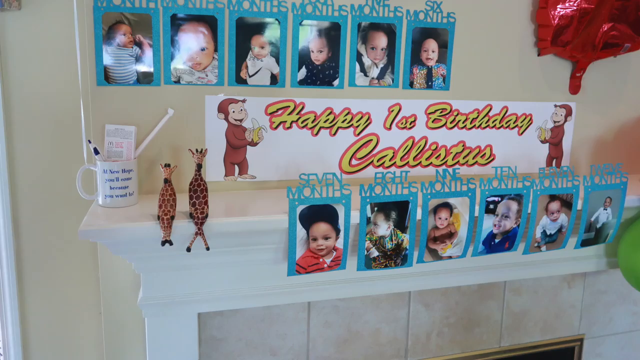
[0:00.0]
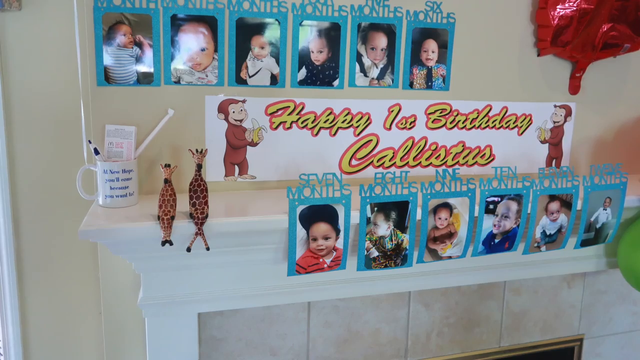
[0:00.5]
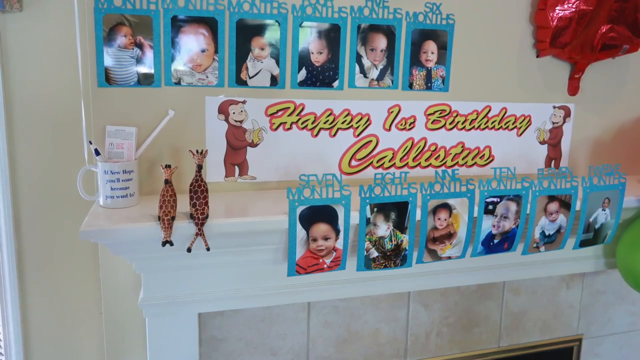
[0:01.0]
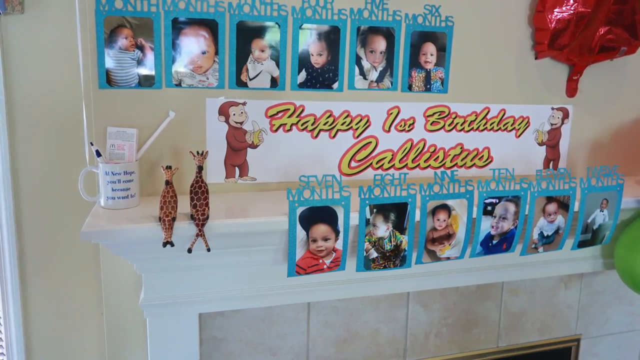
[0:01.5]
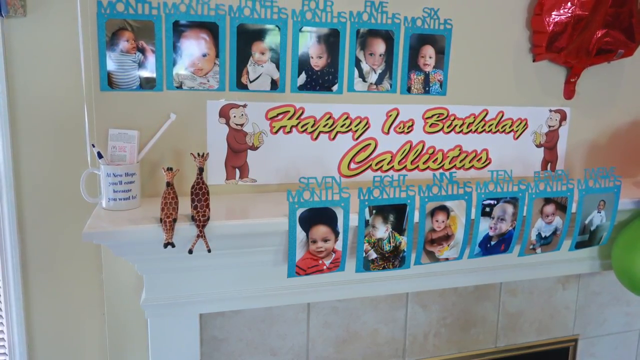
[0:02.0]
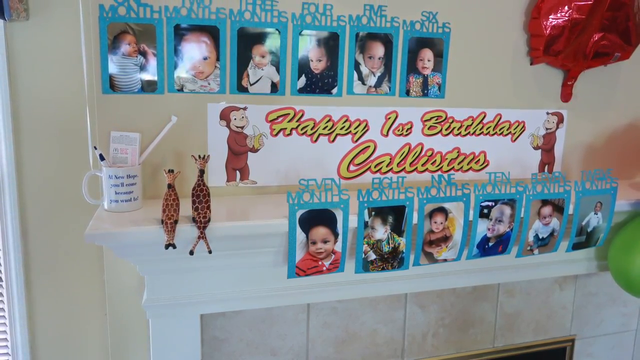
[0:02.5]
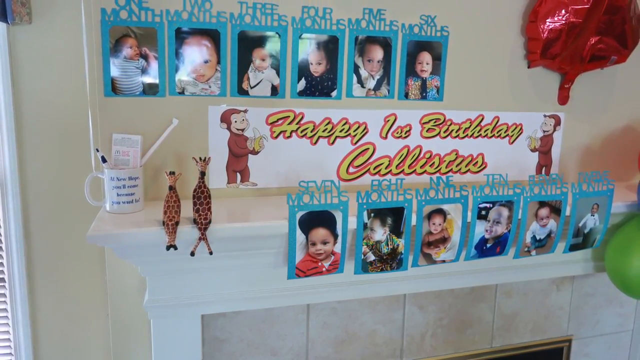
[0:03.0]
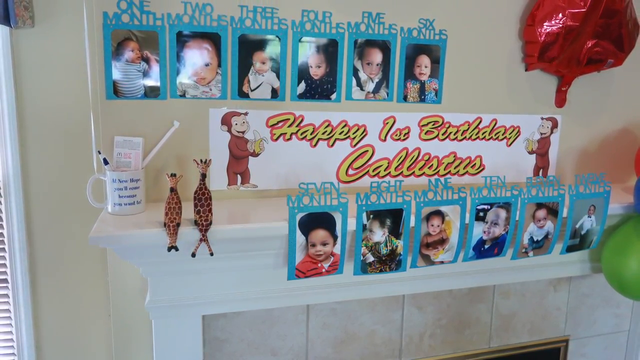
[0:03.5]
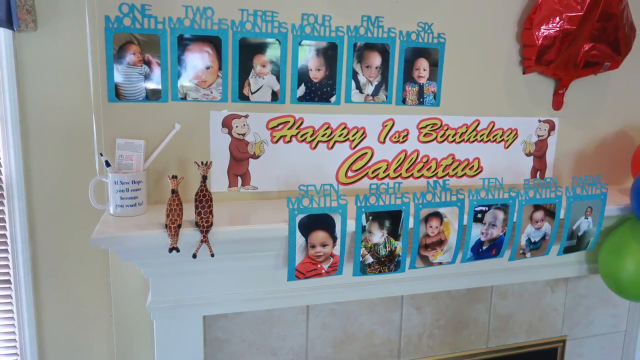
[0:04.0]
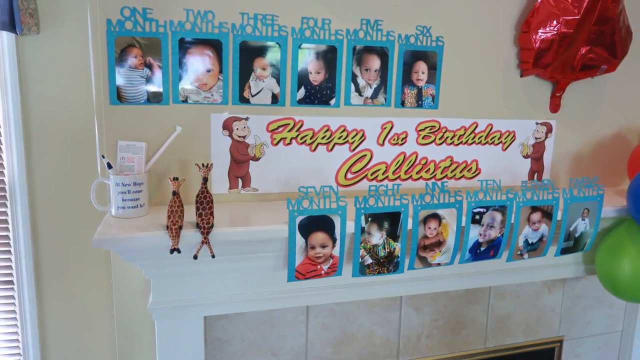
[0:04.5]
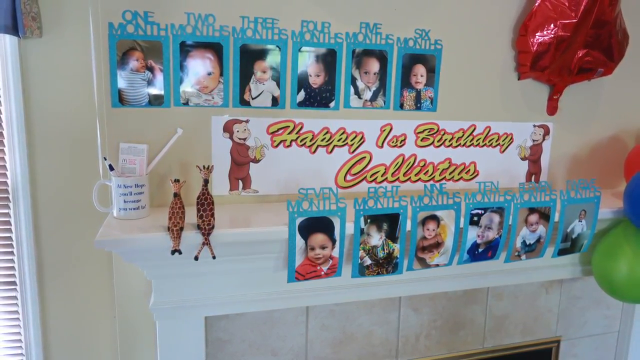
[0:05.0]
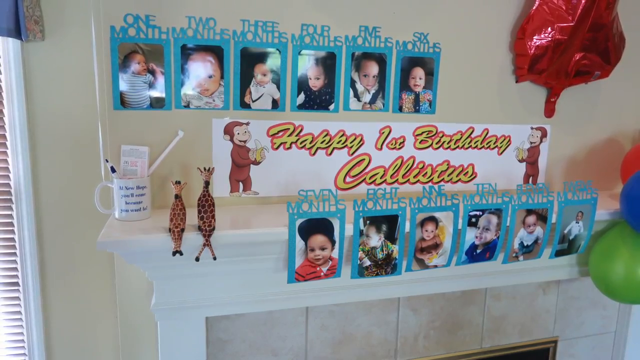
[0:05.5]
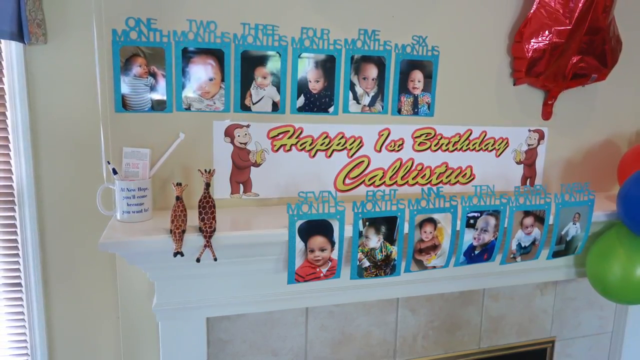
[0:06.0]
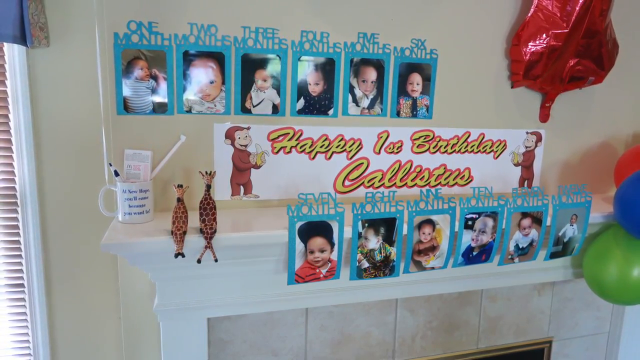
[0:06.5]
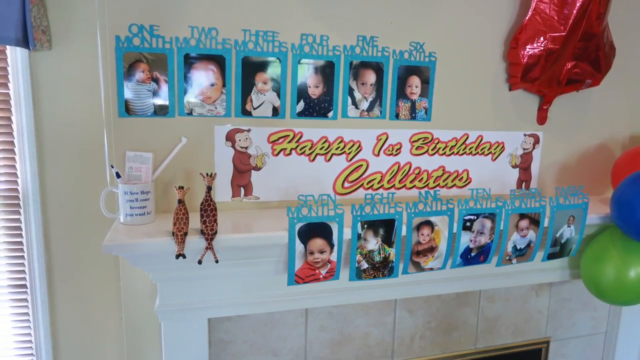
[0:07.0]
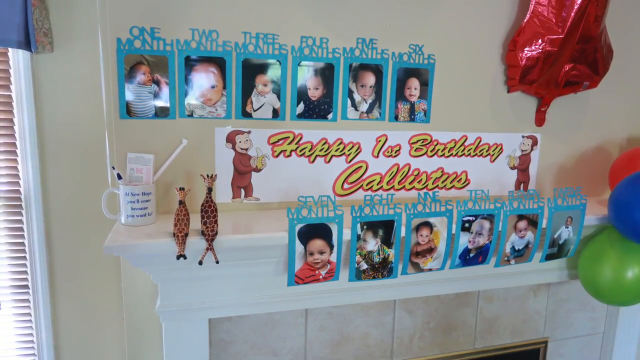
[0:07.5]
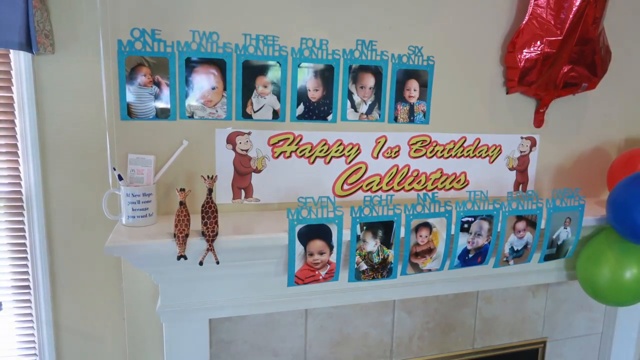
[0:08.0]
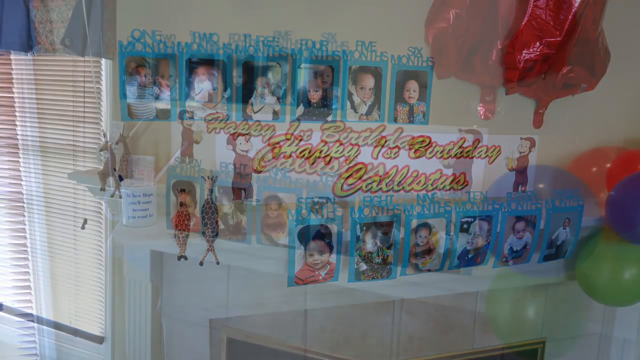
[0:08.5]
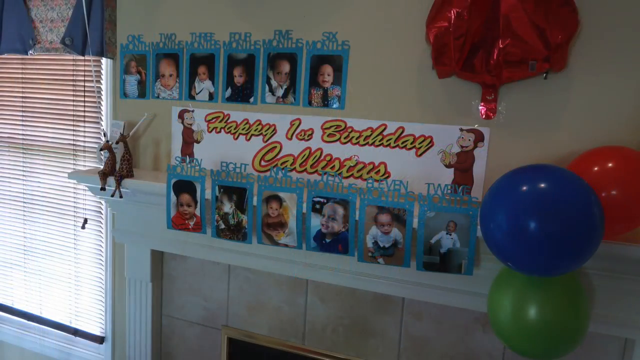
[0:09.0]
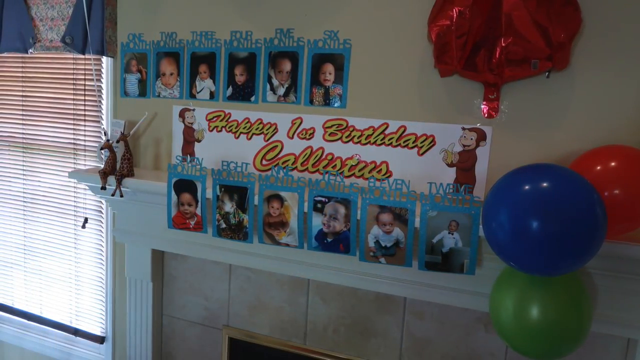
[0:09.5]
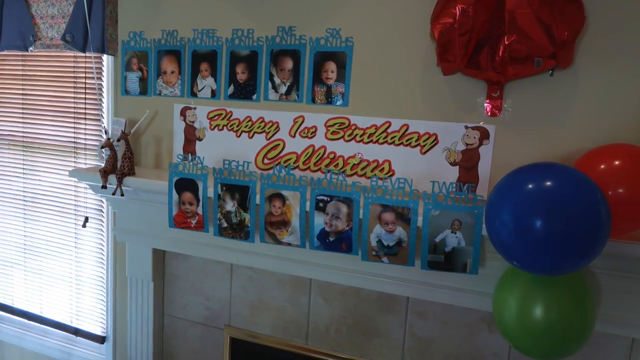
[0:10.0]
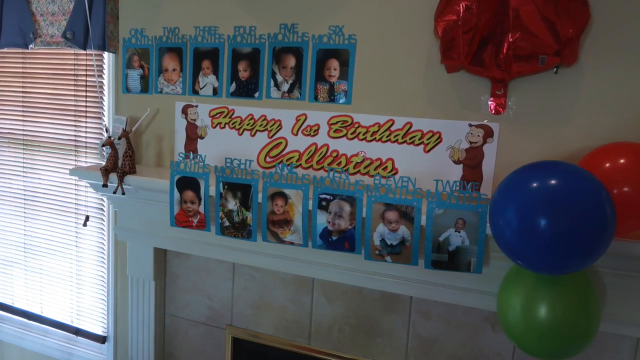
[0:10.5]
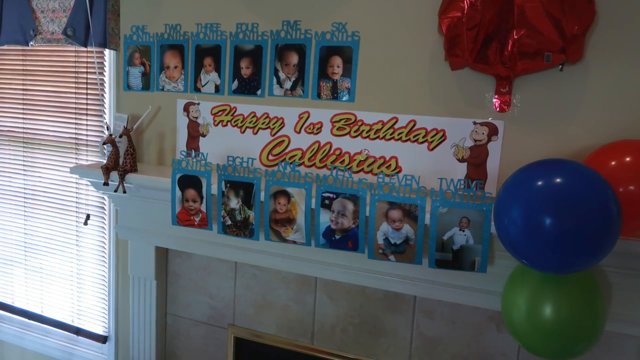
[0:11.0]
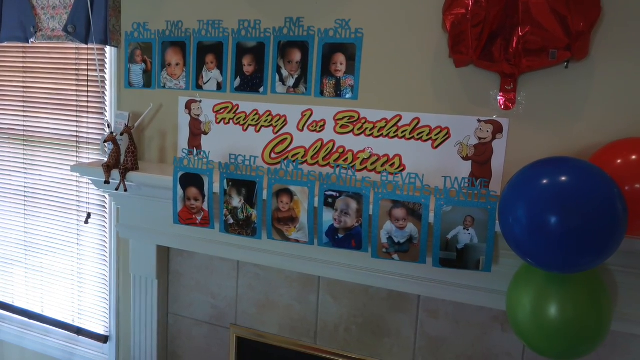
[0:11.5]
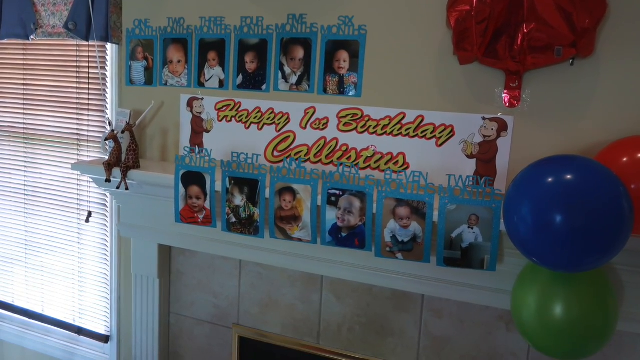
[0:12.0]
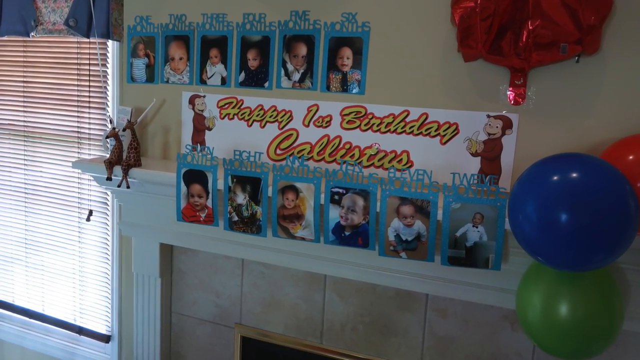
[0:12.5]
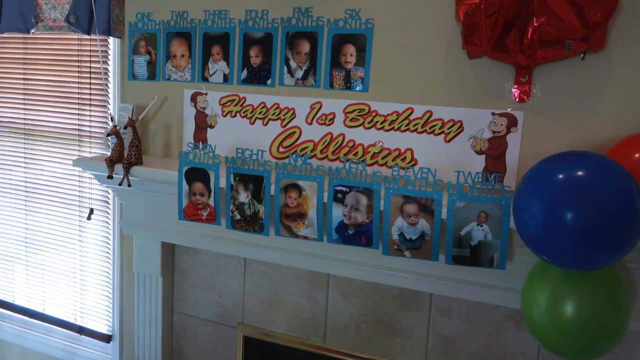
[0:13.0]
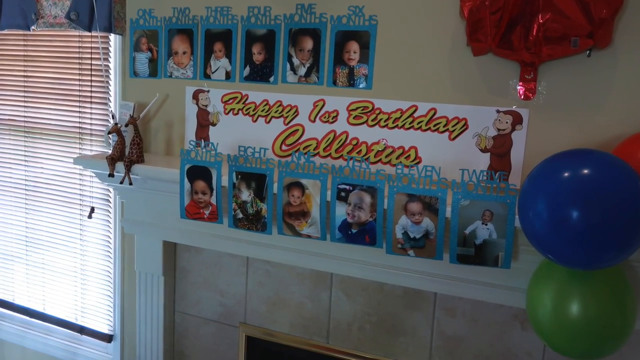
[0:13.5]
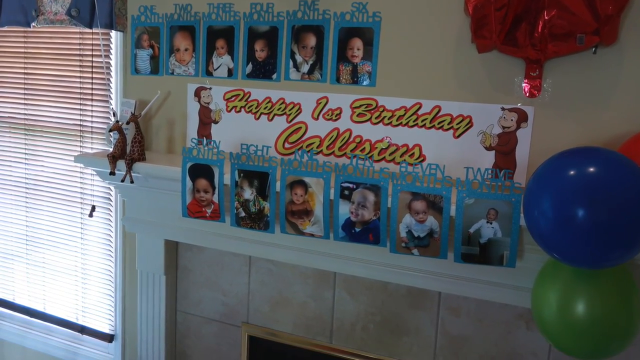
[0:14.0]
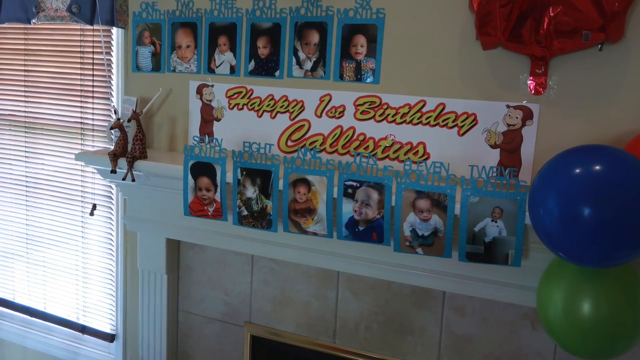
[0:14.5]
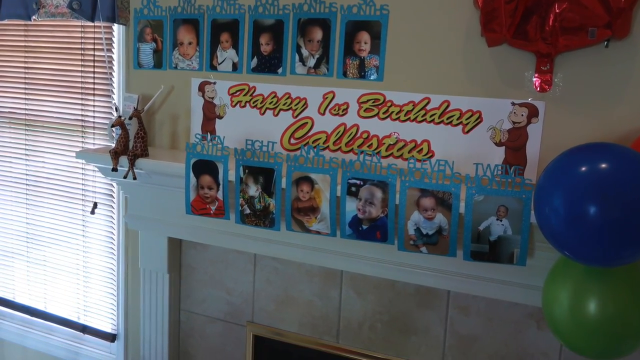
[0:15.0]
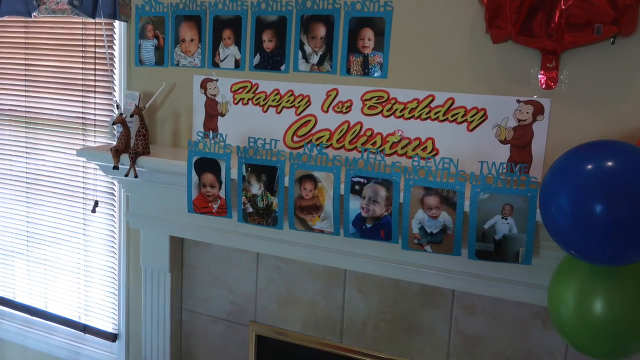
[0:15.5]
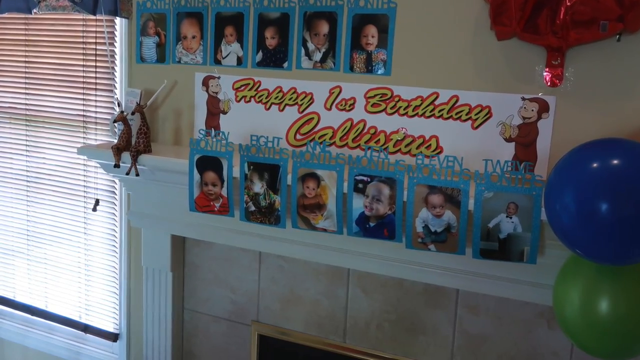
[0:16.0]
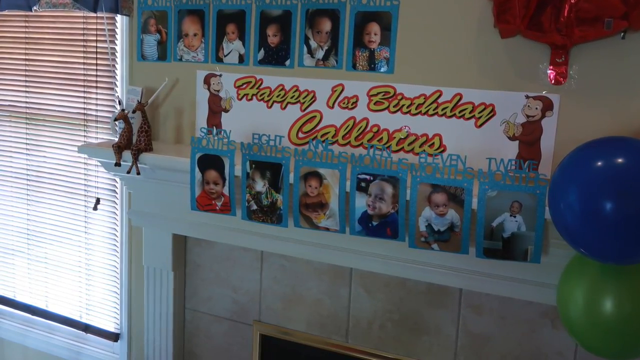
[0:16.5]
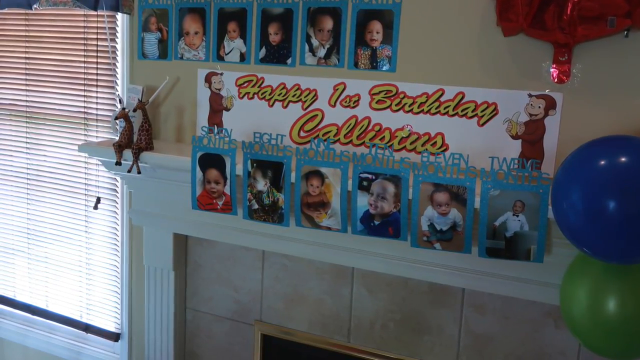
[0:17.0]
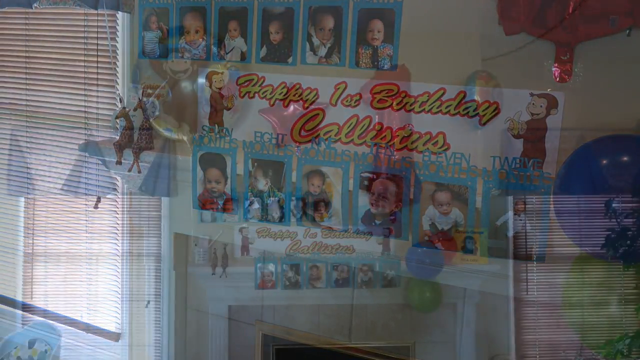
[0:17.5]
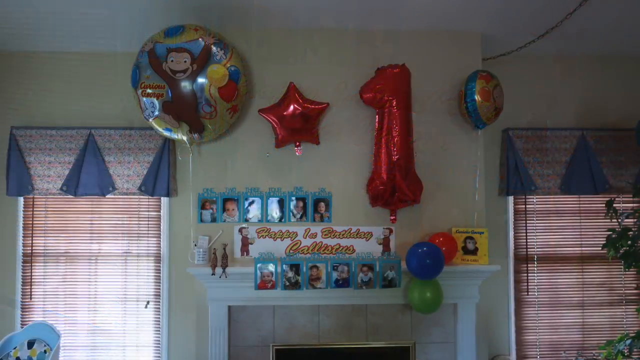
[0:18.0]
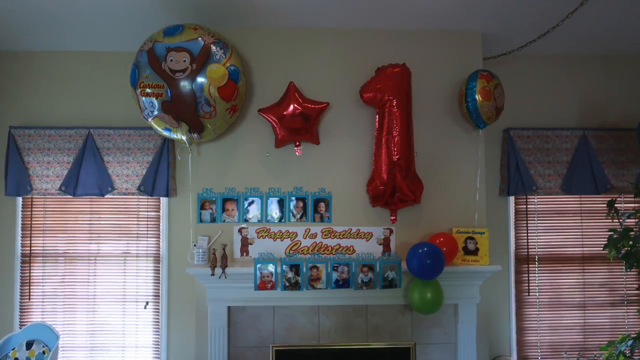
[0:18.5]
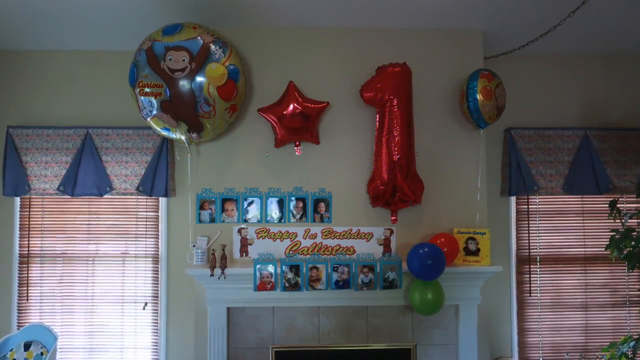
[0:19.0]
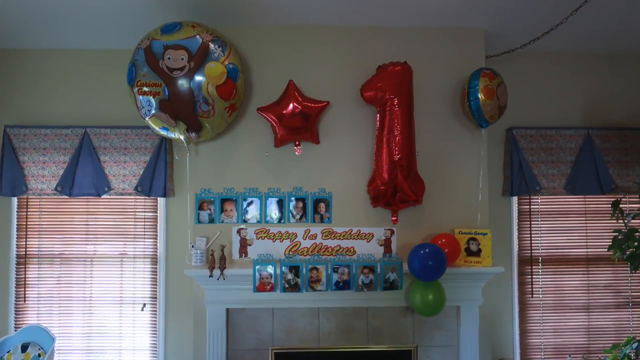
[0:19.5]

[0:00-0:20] Pictures show a mantle over a fireplace; at first it is hard to tell whether they are real photographs or AI-type images, but a view from a different angle with less lighting shows they are real. Above the mantle are six photos for the baby's months one through six, and underneath a "happy first birthday" banner are photos for months seven through twelve, up to the year. The banner is above the mantle, between the two levels of photos, and the lower six photos are taped to the front of the mantle. There appears to be a mug on the mantle, and a couple of toy giraffes hang off it. Balloons are on the right side, with what looks like a couple of balloons cut off at the right edge of the picture.